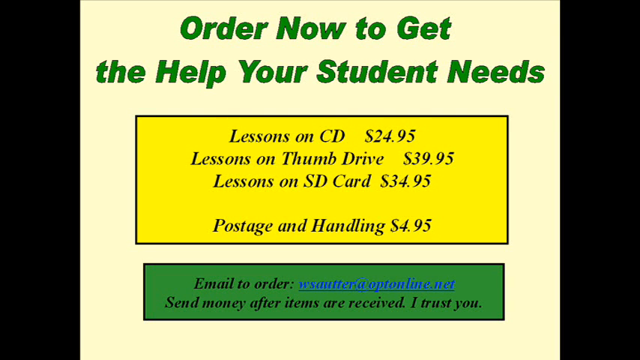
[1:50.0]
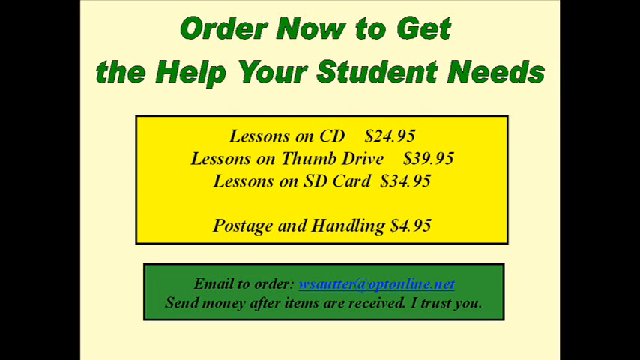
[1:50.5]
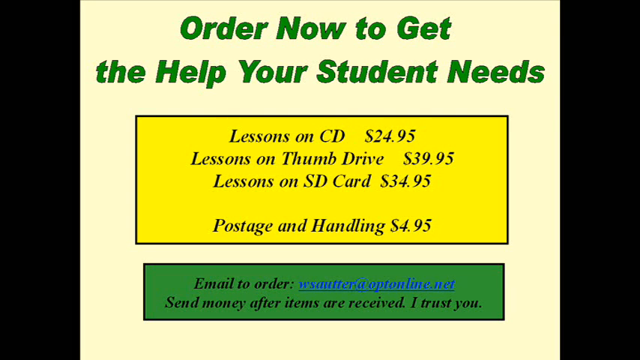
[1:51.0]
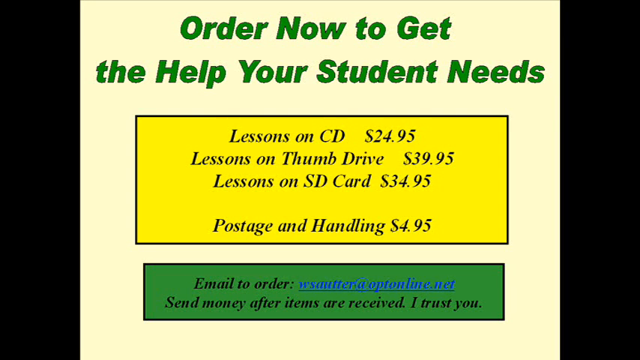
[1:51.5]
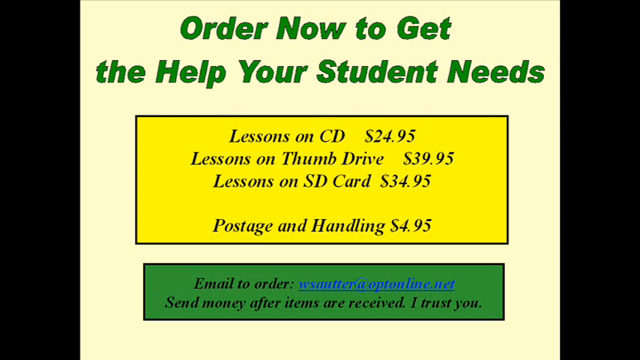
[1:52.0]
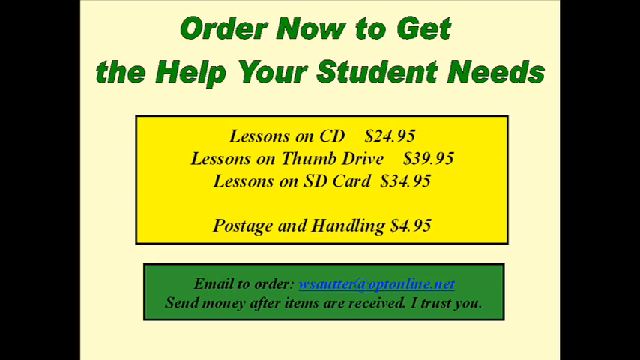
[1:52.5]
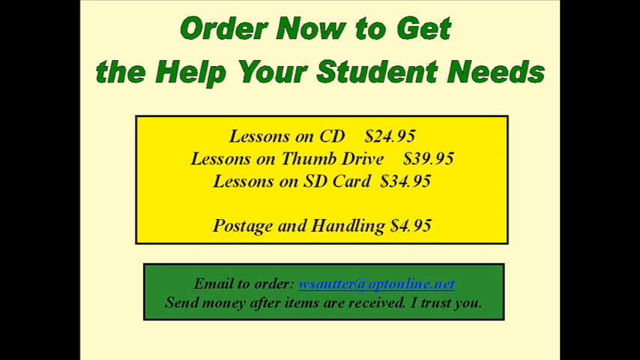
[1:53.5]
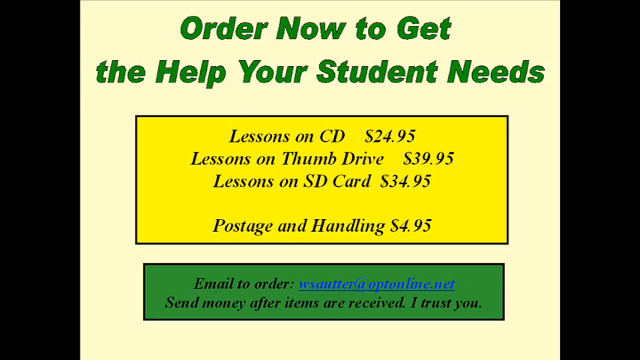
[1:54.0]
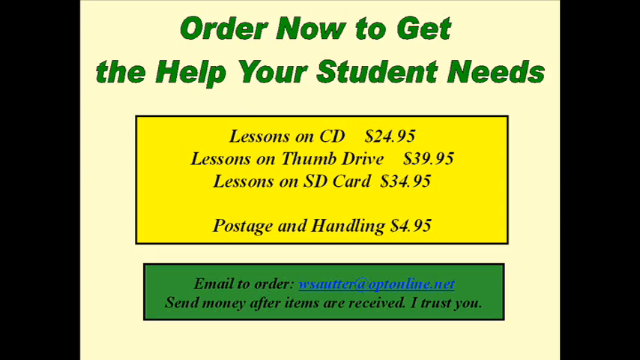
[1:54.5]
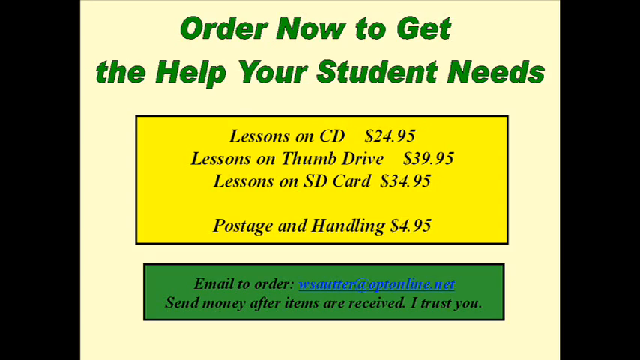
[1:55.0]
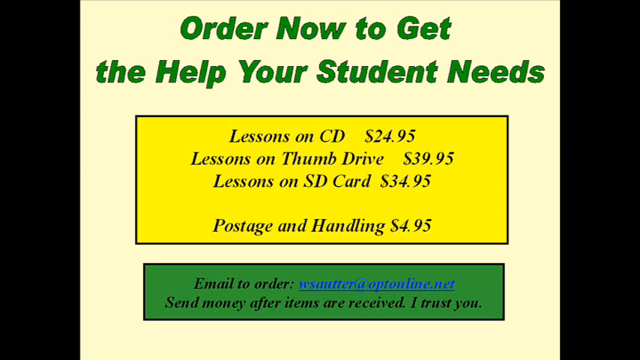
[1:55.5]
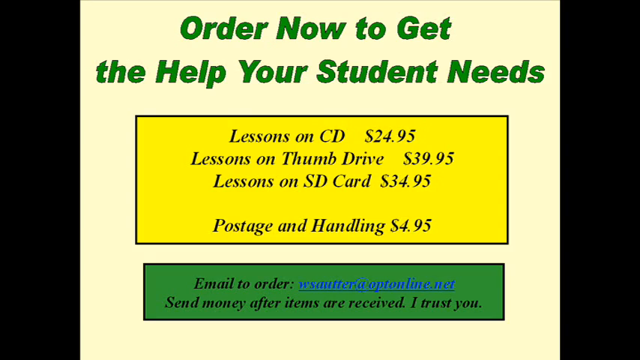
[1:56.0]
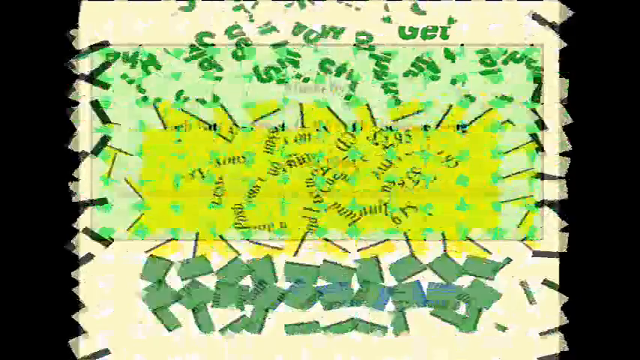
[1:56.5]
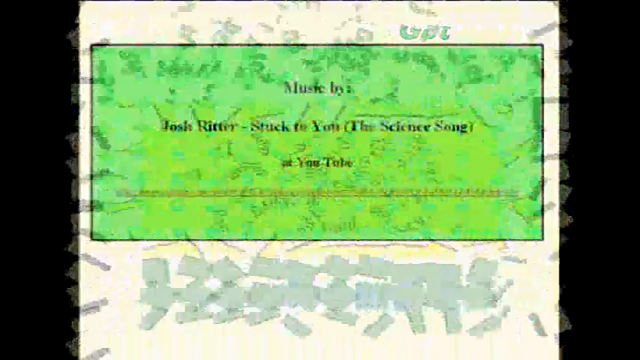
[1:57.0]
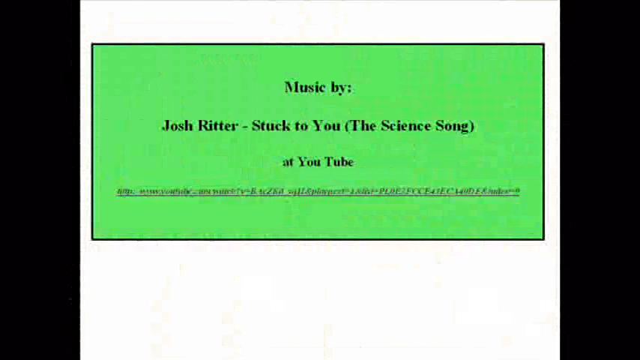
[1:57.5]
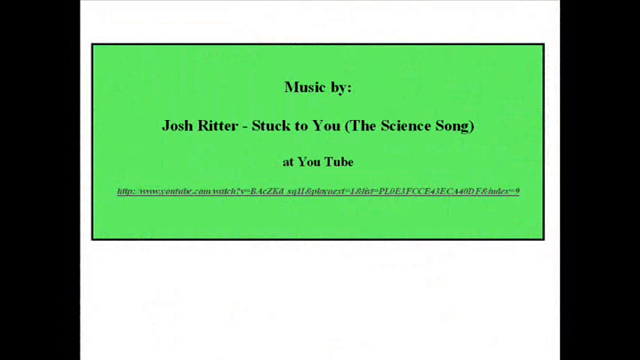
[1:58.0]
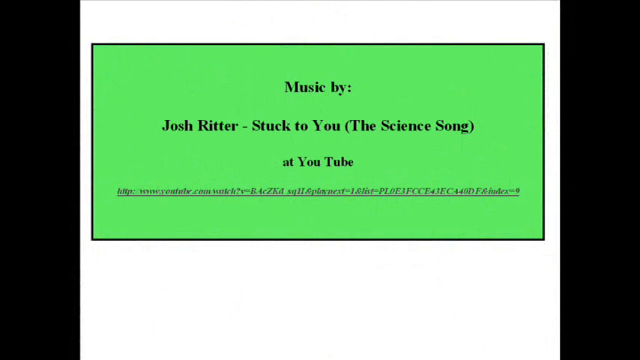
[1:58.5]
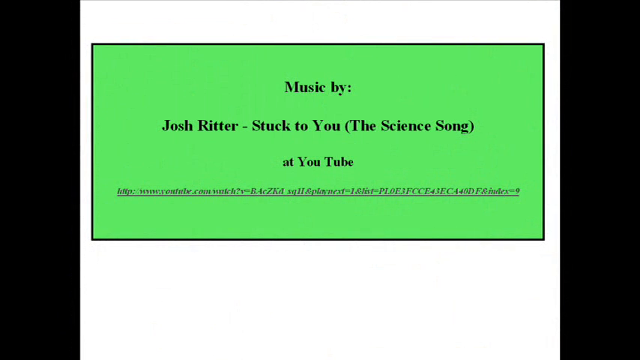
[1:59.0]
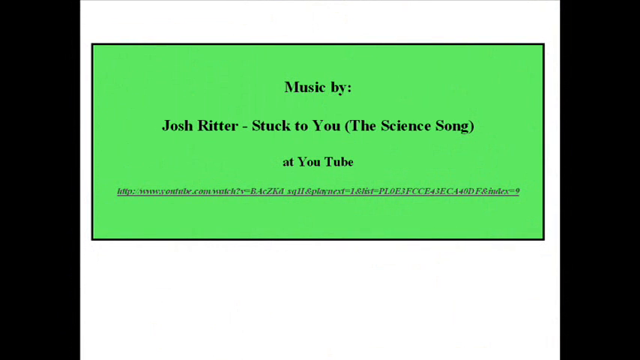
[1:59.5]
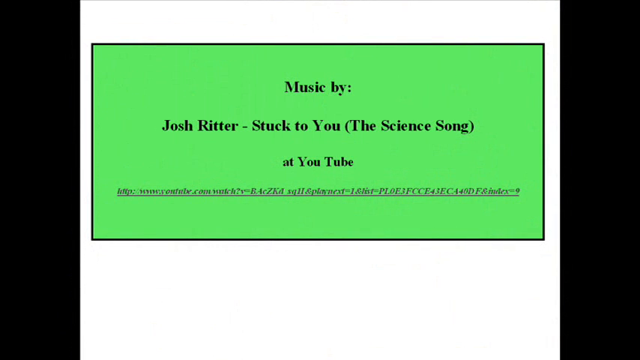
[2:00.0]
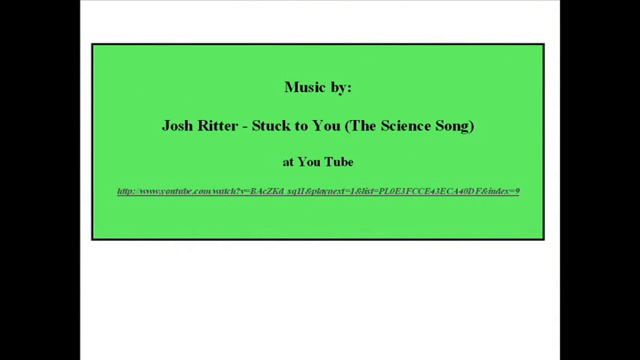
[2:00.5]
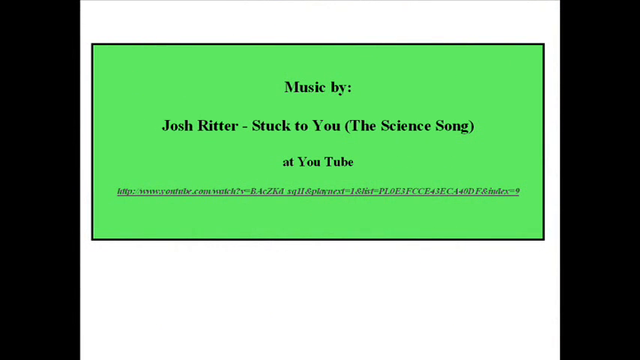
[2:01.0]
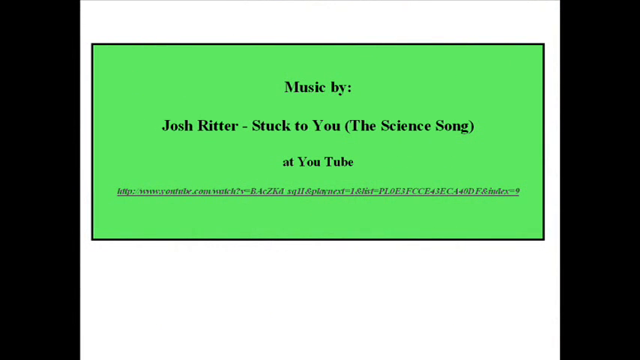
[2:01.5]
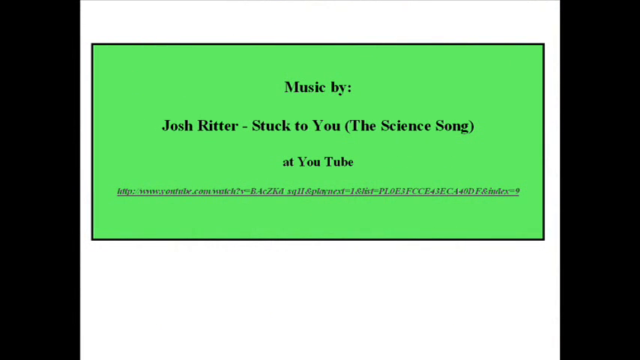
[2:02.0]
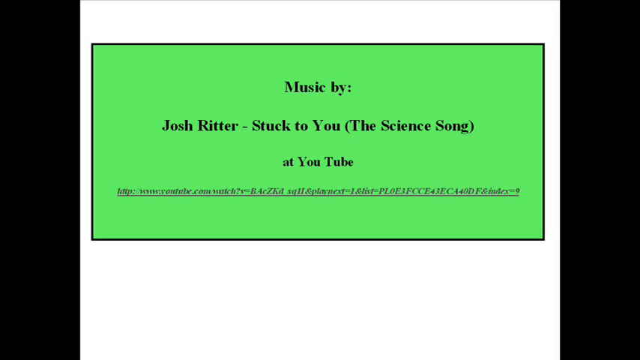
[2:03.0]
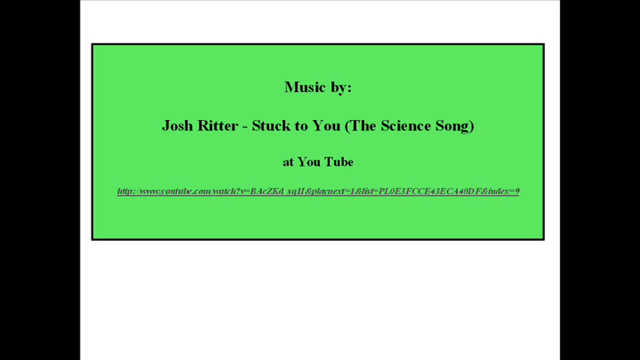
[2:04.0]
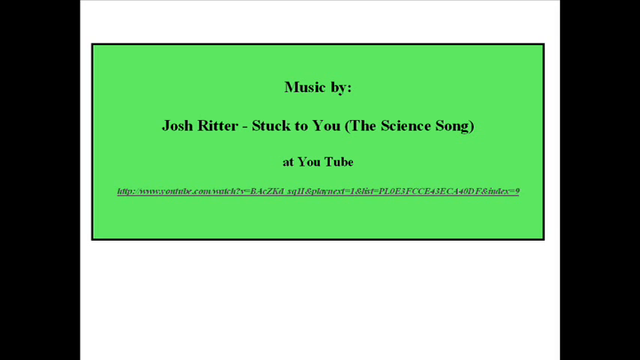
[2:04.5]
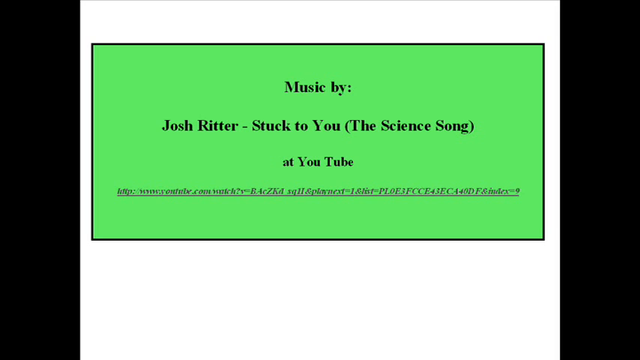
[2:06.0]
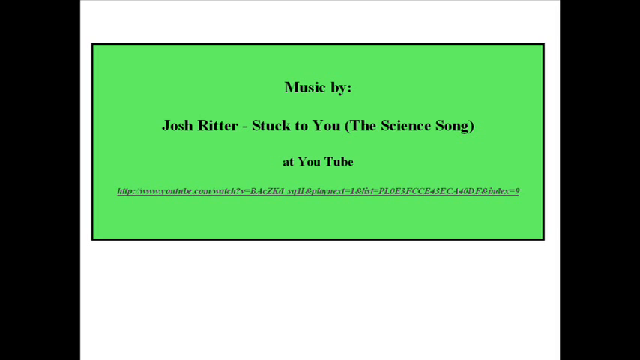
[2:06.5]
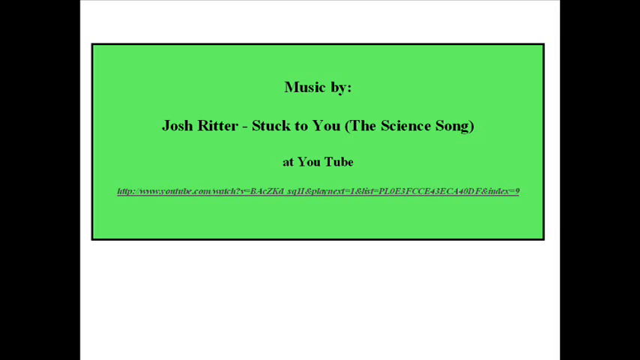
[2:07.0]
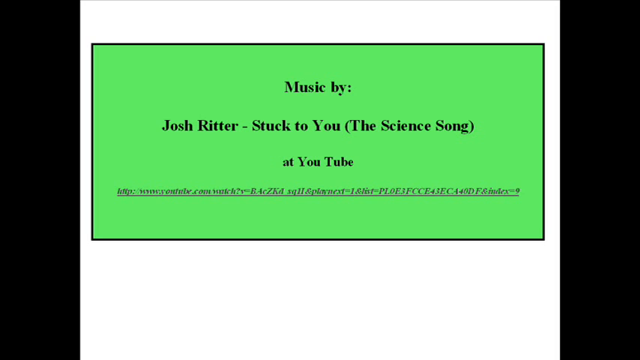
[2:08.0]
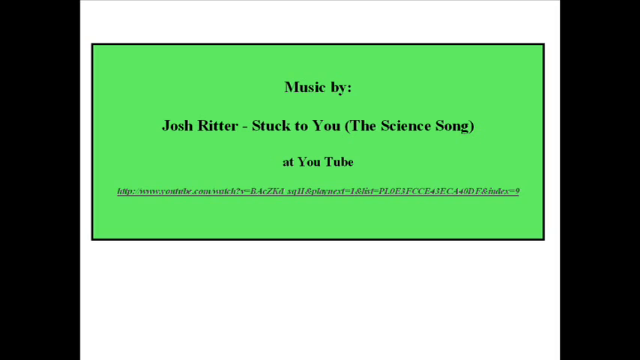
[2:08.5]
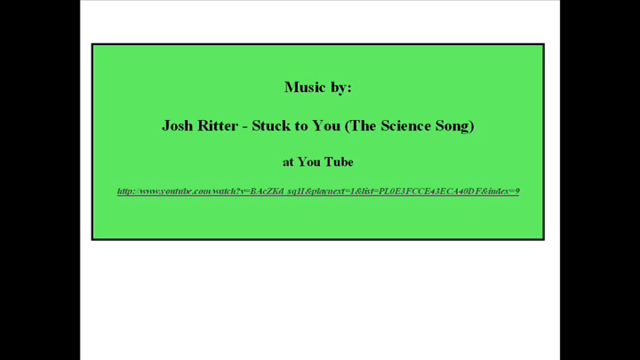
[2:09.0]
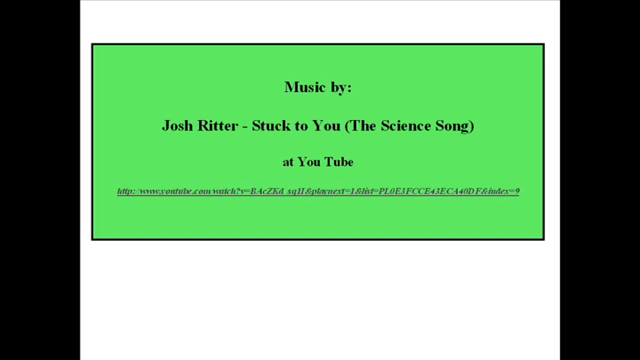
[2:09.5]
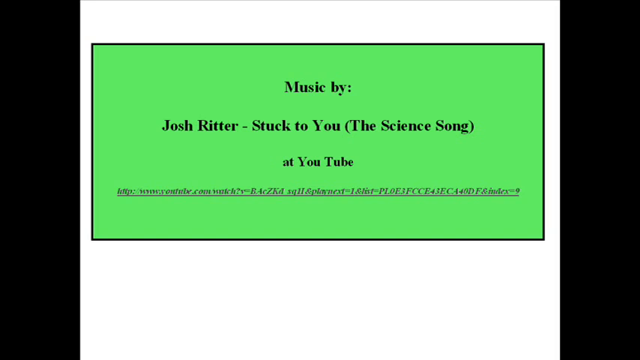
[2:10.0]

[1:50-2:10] On the new image, green text at the top reads "order now to get the help your student needs." The box below it is yellow and shows the prices of different lessons. A green box at the bottom shows an email address for ordering lessons, and below the email, text reads "send money after items are received I trust you." A transition shatters the screen into another image: a white background with a green text box crediting the music used, including the song's name and artist, along with a link to the song's YouTube video.